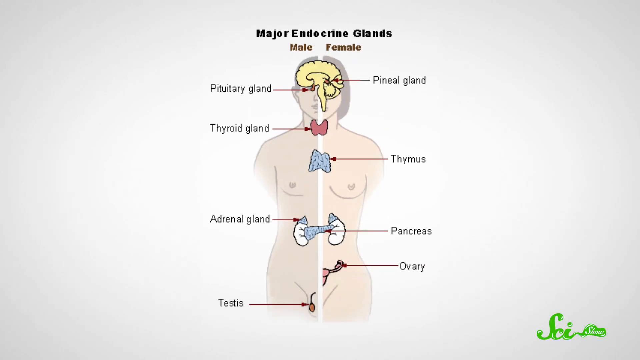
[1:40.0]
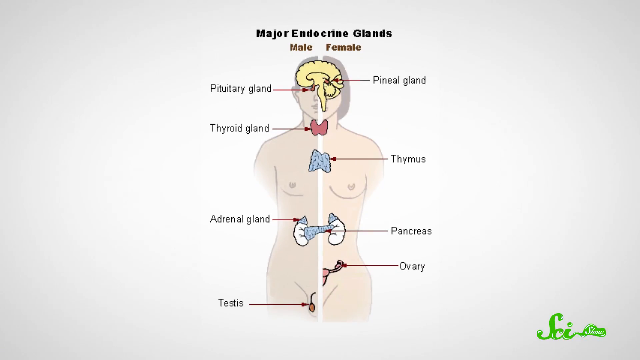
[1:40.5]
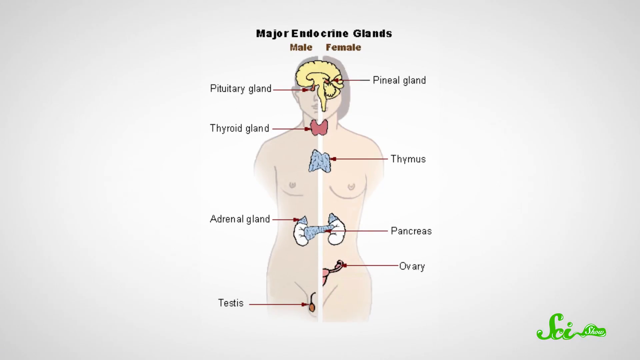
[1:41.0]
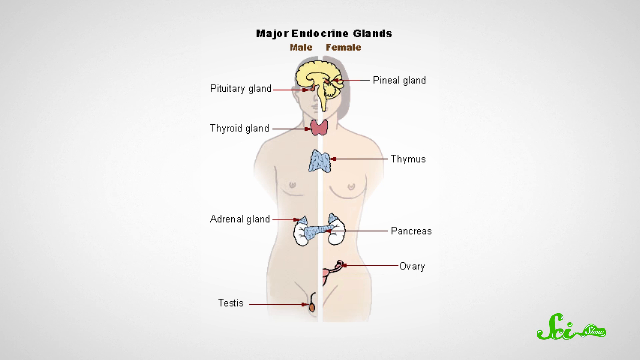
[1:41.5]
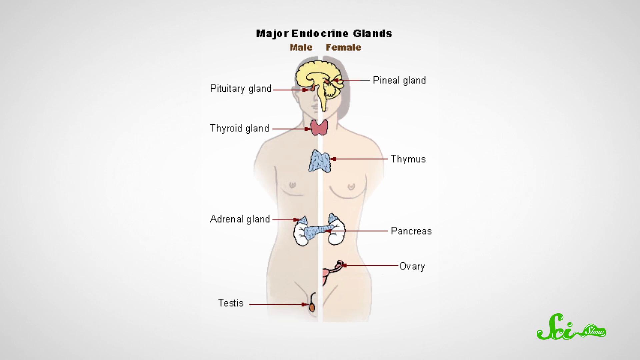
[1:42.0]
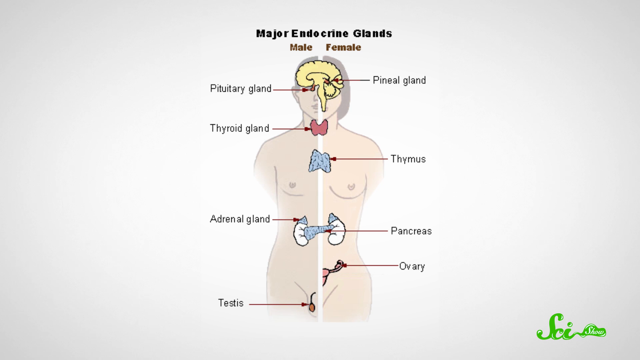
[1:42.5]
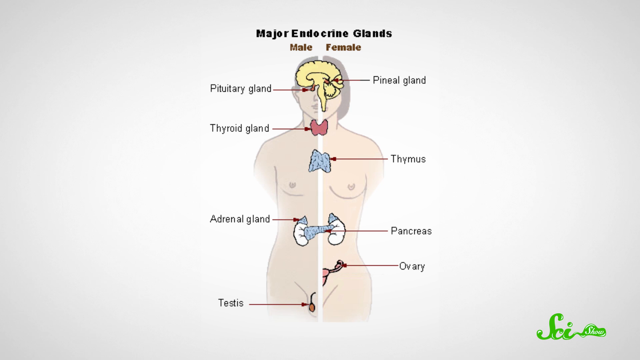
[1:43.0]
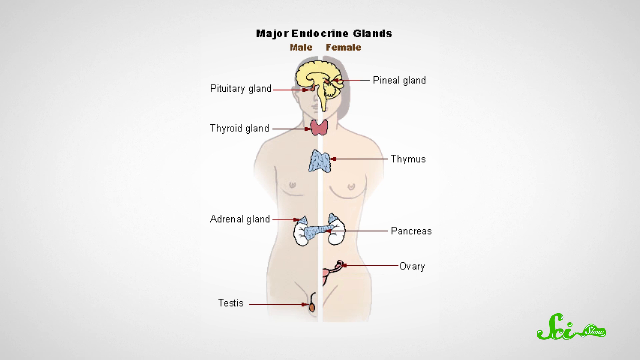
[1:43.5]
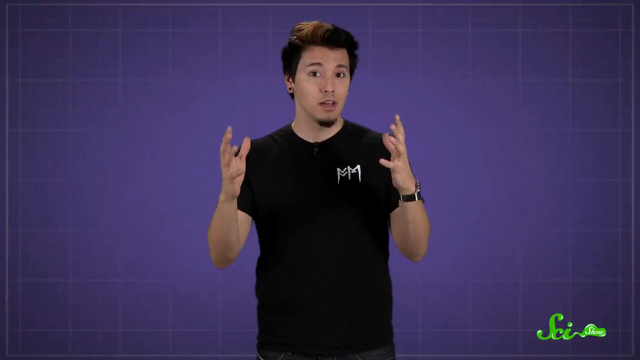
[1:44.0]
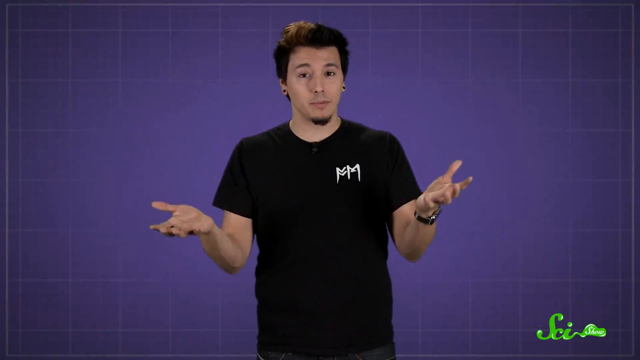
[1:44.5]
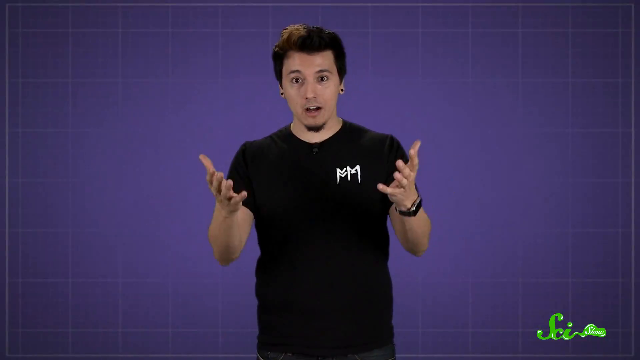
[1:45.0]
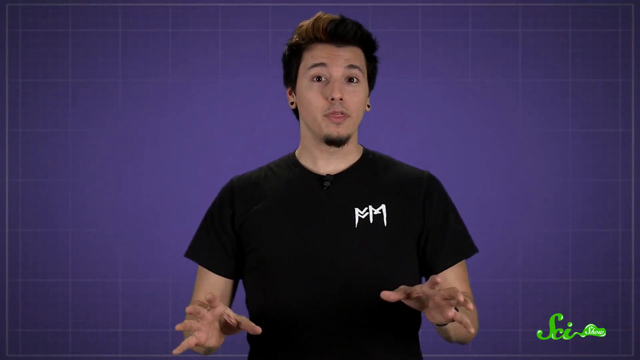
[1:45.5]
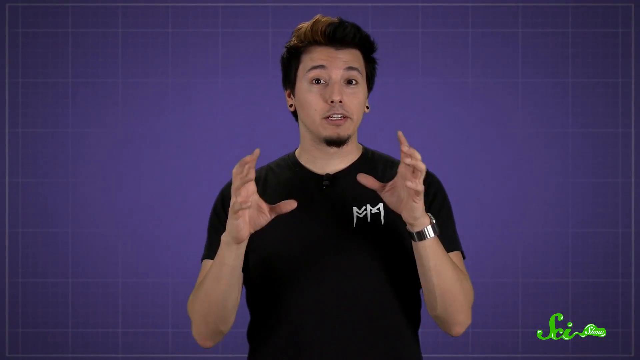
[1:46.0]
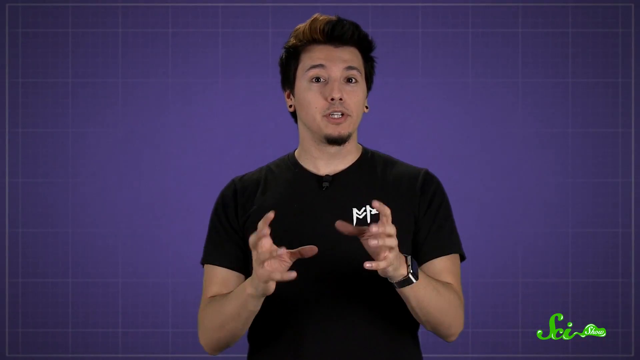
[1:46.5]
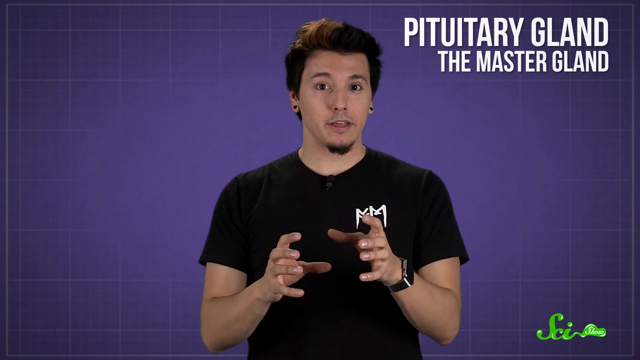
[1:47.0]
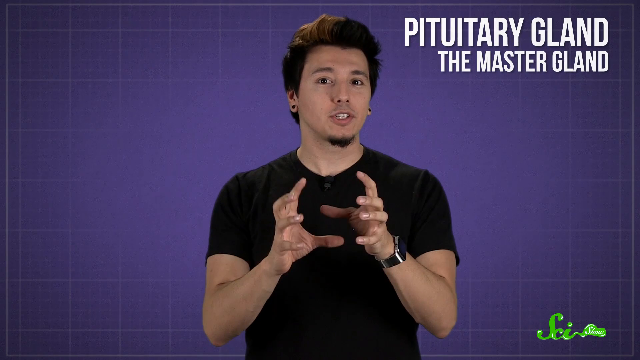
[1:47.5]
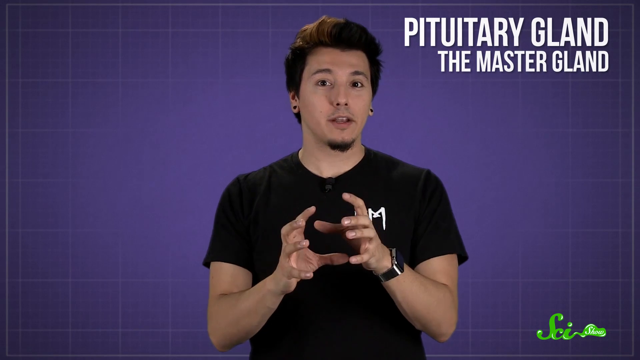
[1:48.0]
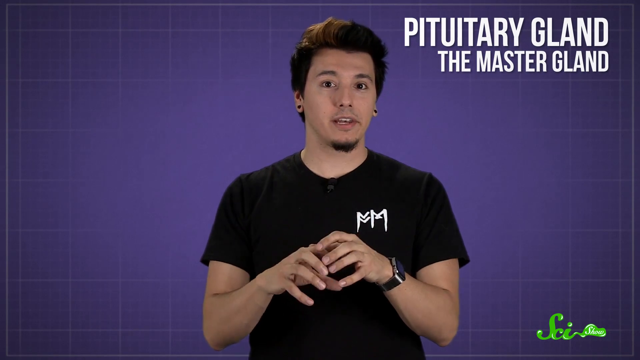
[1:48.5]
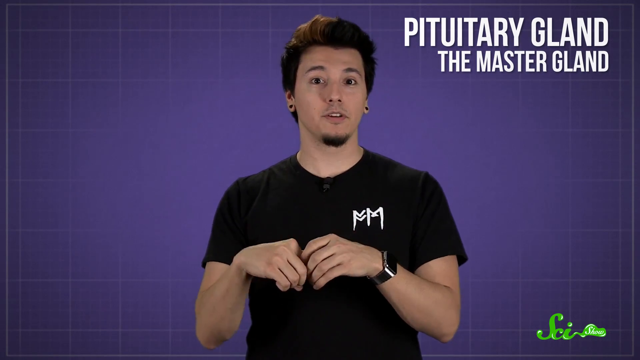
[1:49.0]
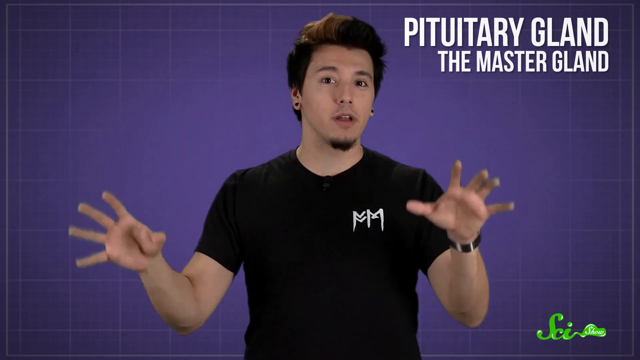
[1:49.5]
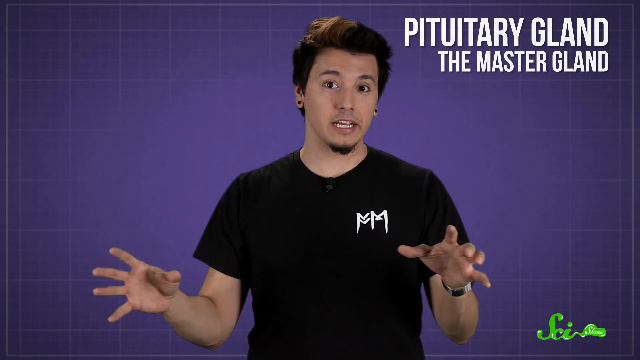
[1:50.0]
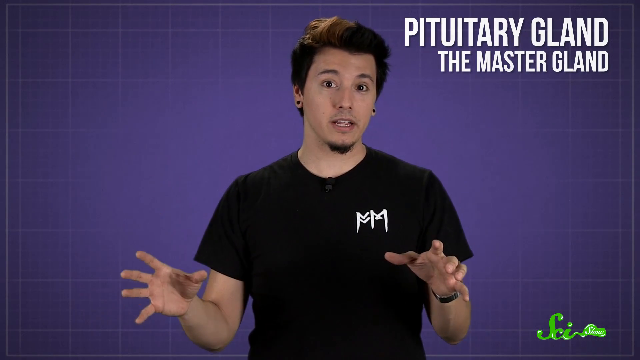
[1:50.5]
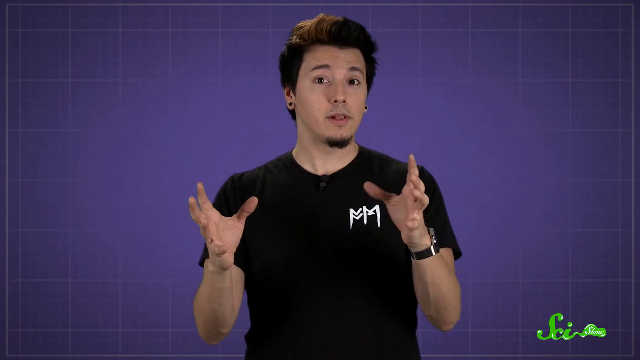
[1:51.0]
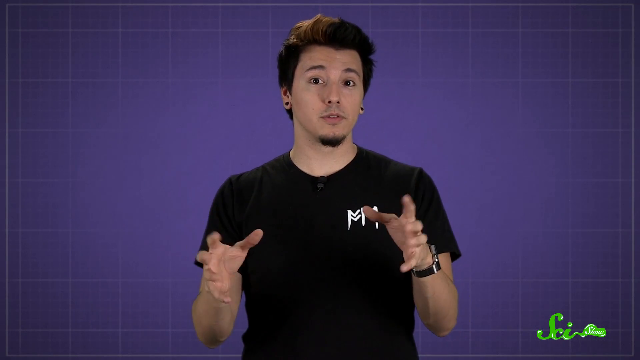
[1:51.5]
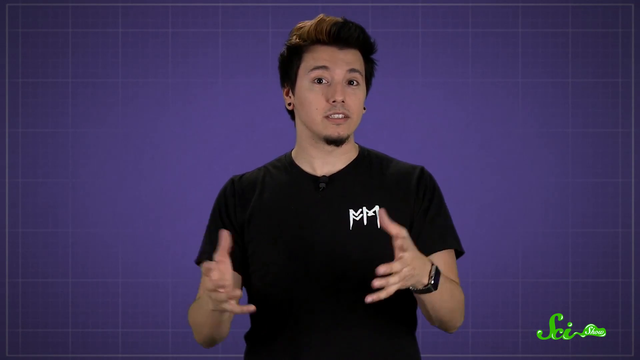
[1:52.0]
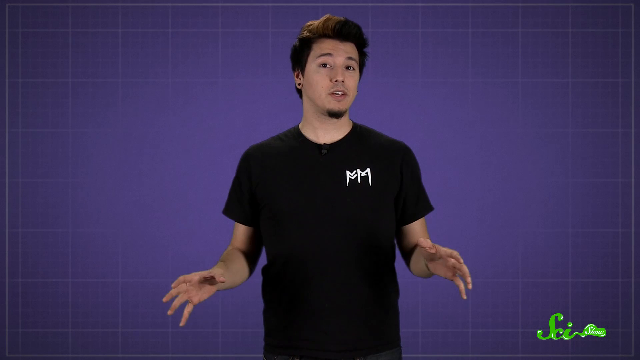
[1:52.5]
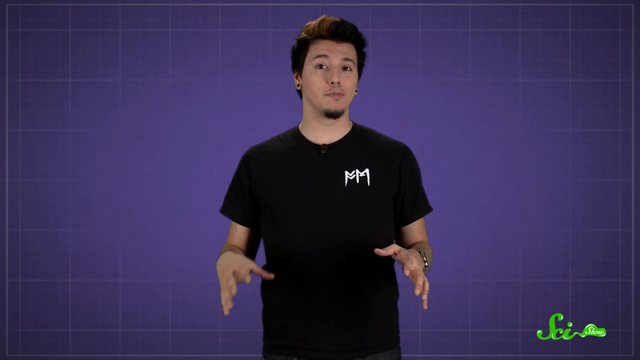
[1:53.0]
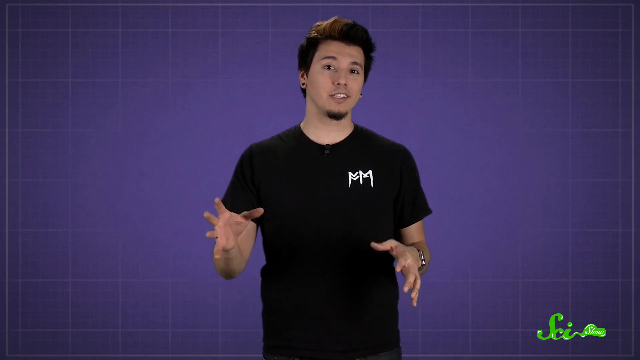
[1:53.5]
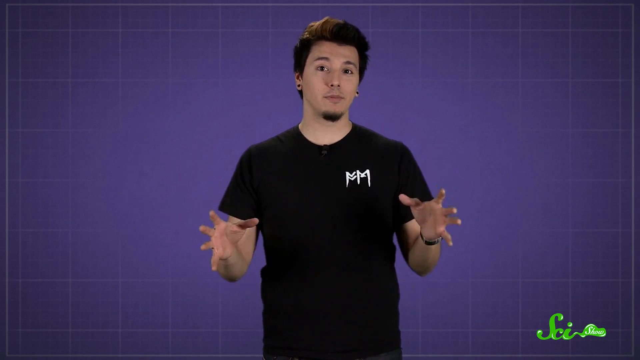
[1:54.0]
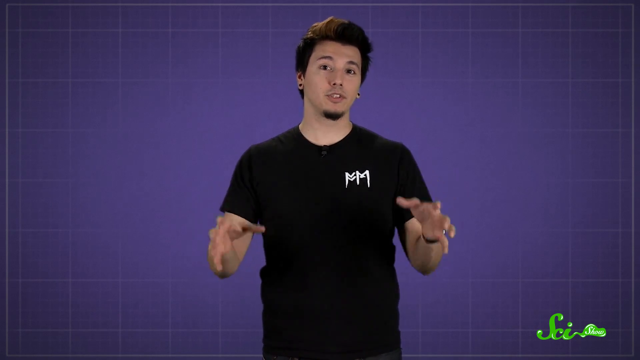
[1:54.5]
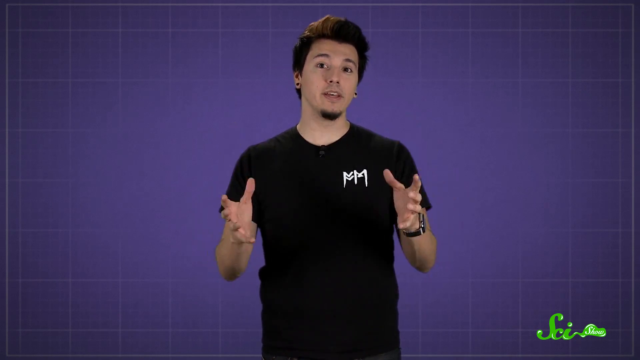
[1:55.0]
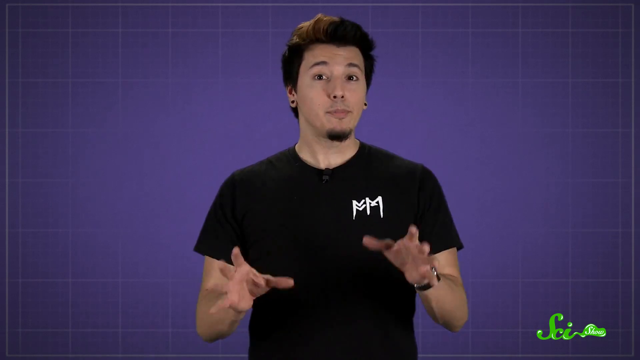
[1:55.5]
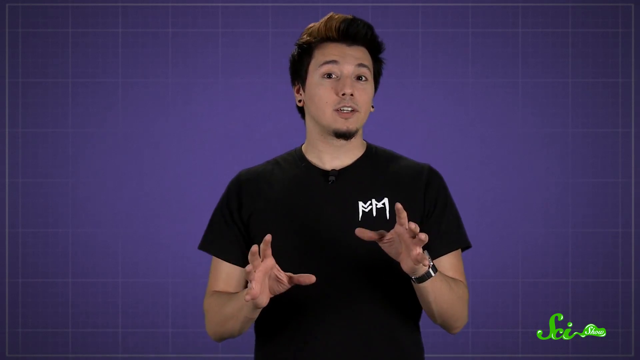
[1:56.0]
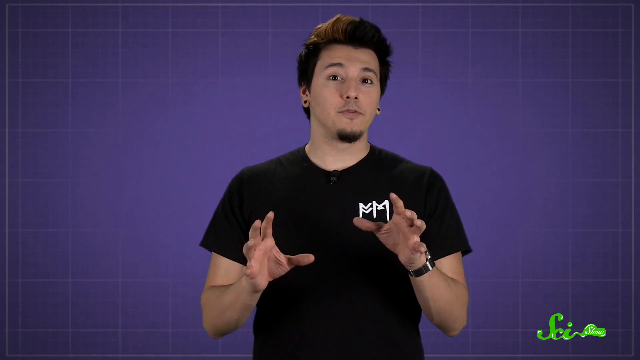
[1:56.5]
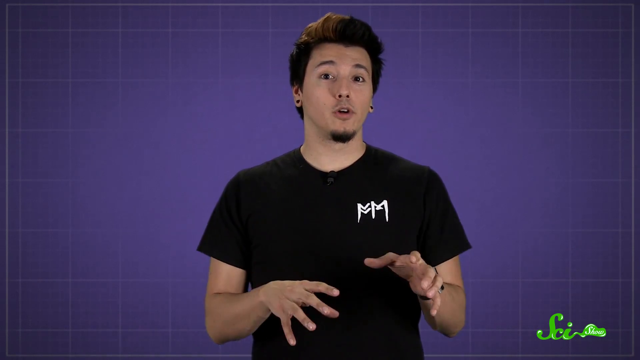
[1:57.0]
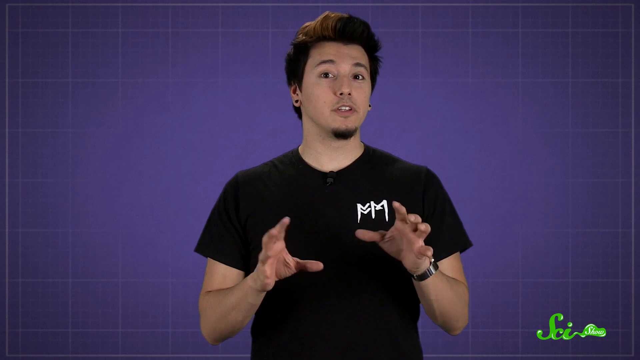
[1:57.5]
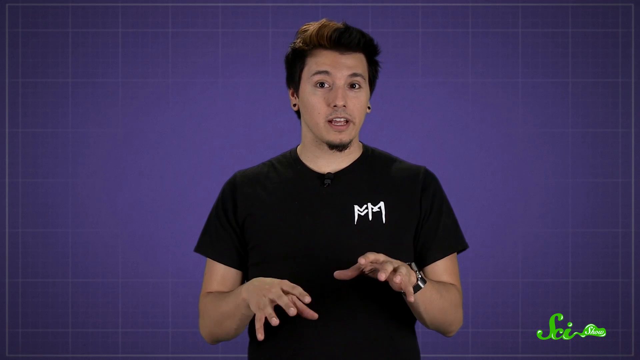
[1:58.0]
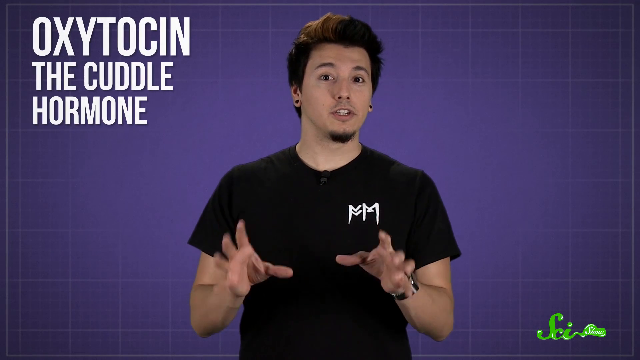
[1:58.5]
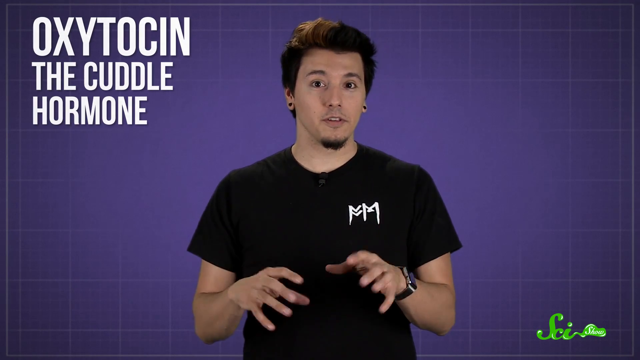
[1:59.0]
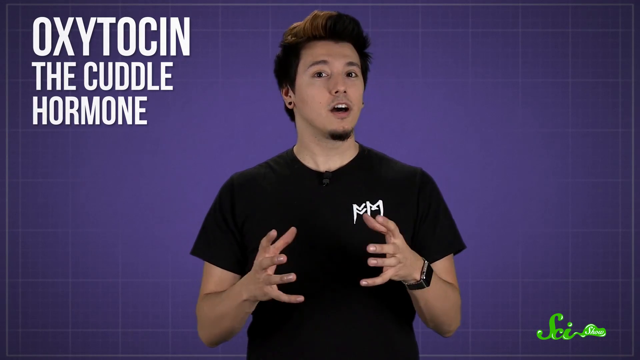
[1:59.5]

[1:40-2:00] A drawn illustration shows the human body from the head down to above the knees, with a male body on the left half and a female body on the right. The header of the drawing reads "major endocrine glands, male, female." Each of the glands on the male and female bodies is labeled. The text labels are black, the arrows are red, the background is a very pale off-white, and the flesh looks like pale human skin. The drawing then moves upward off the screen, revealing a young man in a black T-shirt against a purple background. Text slides in at the upper right of the screen, reading "the pituitary gland, the master gland." The young man continues to speak, gesturing with his hands, and the text disappears while he keeps speaking. Next, another text slides in from the upper left, reading "oxytocin, the cuddle hormone."